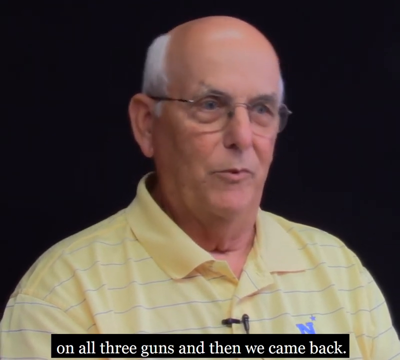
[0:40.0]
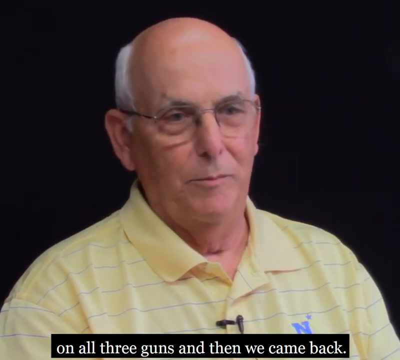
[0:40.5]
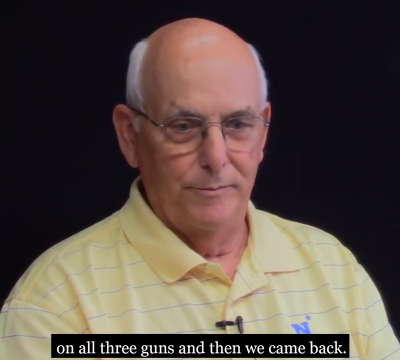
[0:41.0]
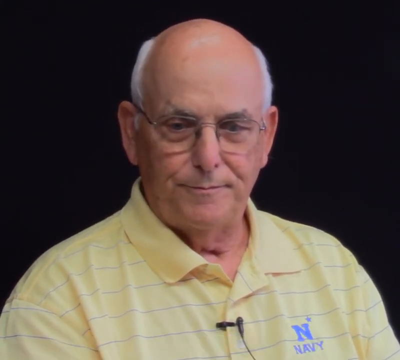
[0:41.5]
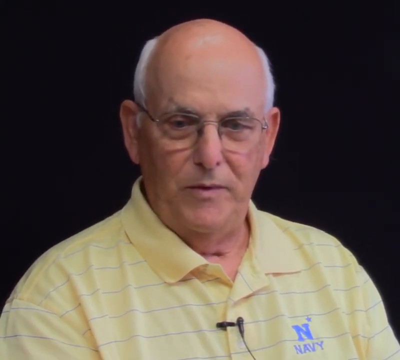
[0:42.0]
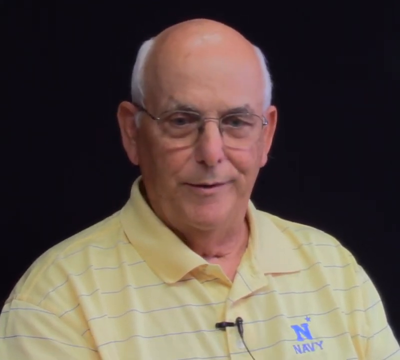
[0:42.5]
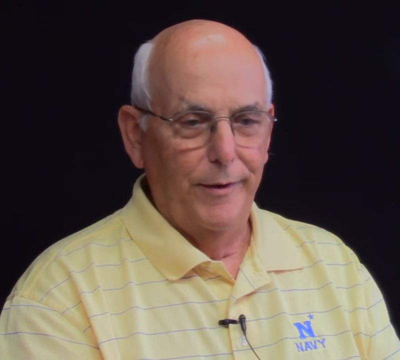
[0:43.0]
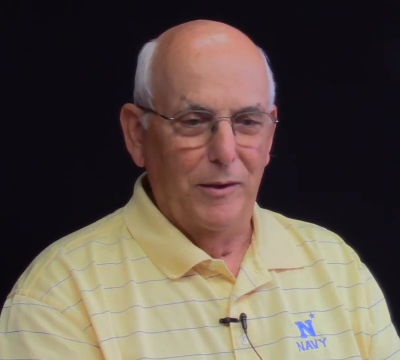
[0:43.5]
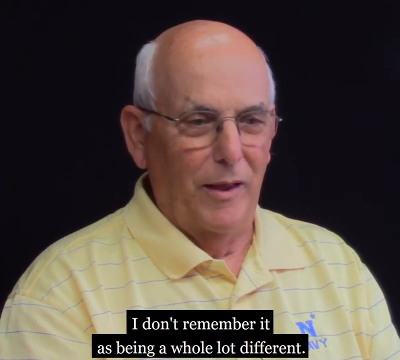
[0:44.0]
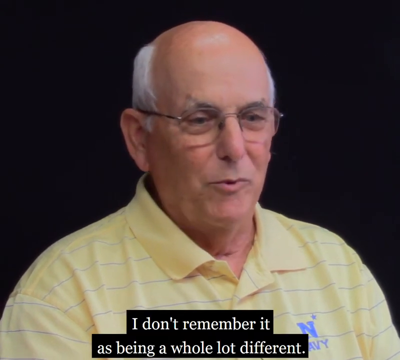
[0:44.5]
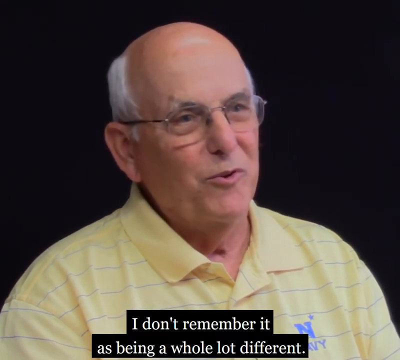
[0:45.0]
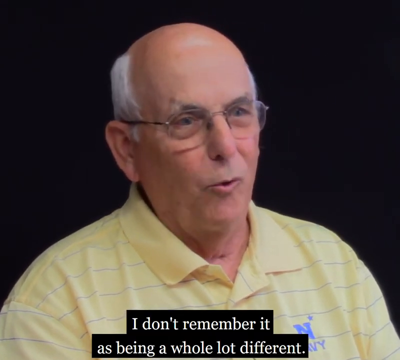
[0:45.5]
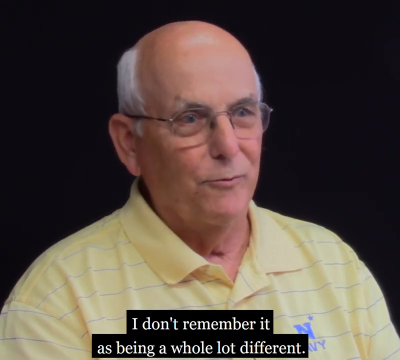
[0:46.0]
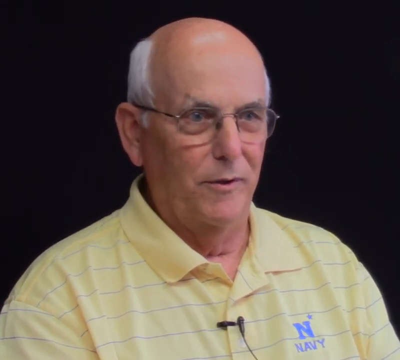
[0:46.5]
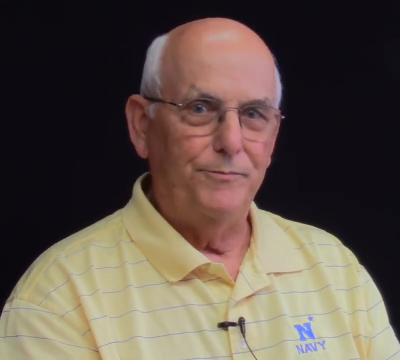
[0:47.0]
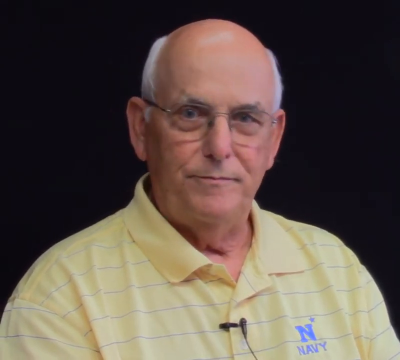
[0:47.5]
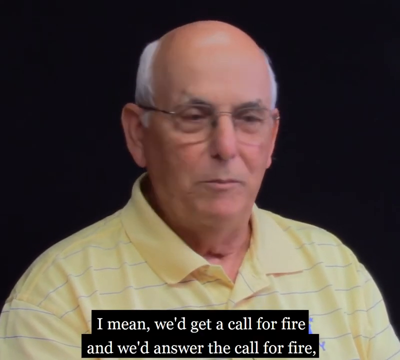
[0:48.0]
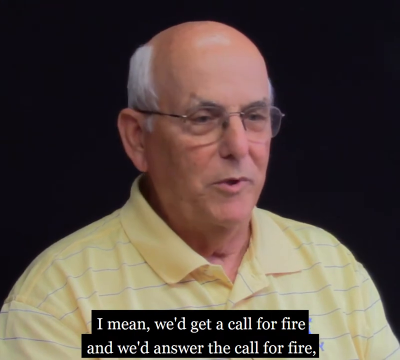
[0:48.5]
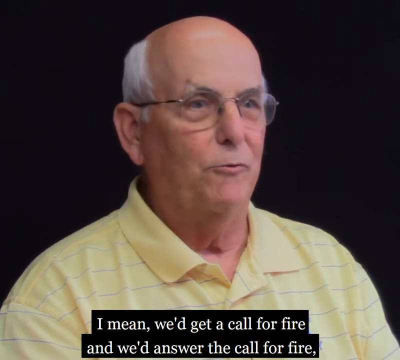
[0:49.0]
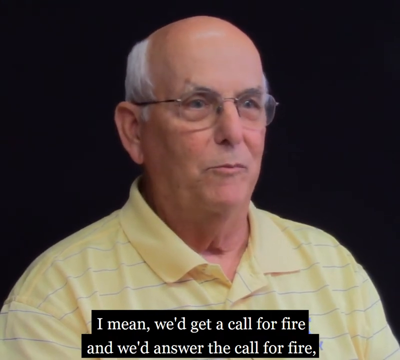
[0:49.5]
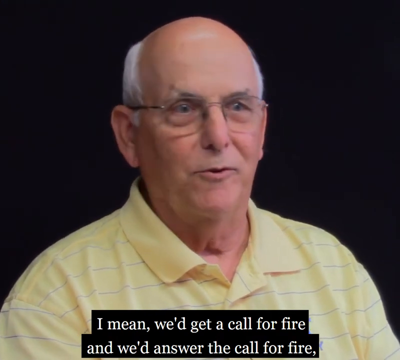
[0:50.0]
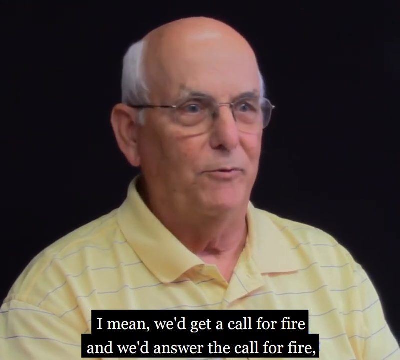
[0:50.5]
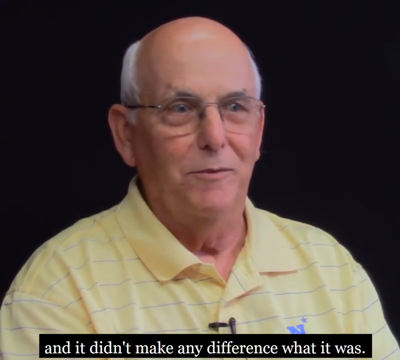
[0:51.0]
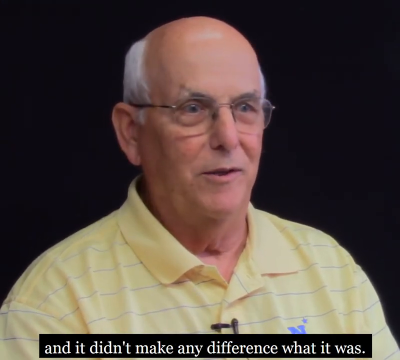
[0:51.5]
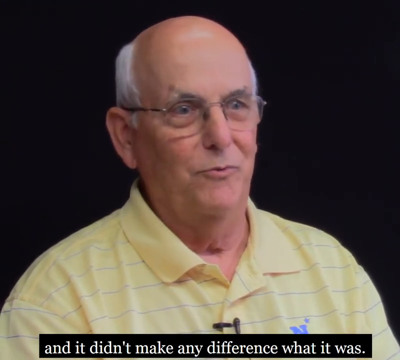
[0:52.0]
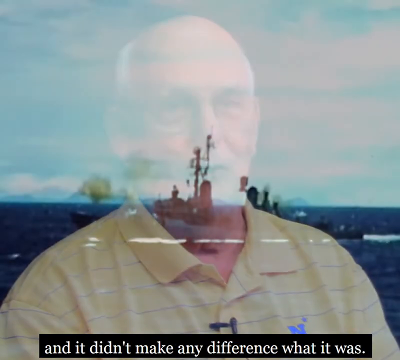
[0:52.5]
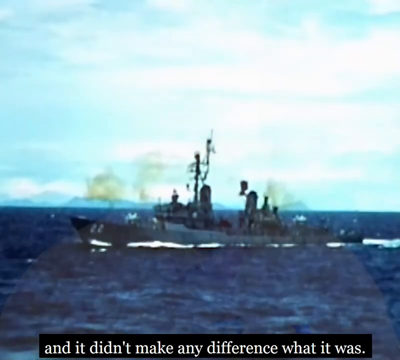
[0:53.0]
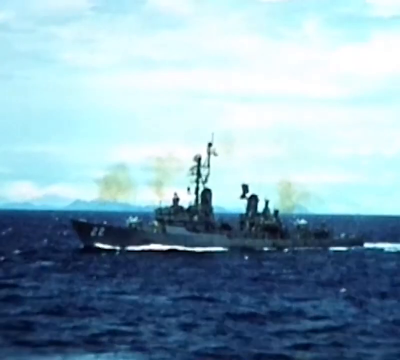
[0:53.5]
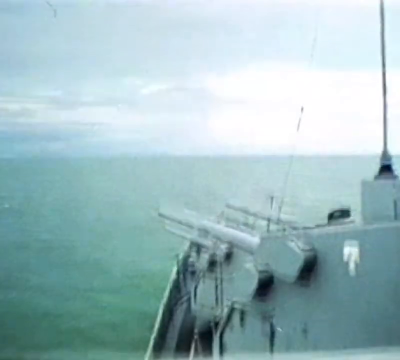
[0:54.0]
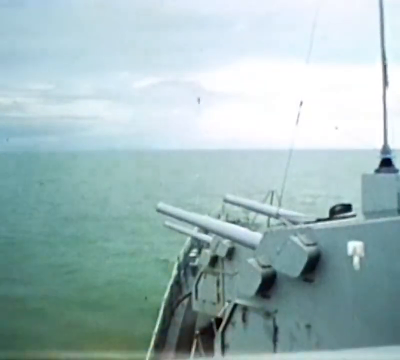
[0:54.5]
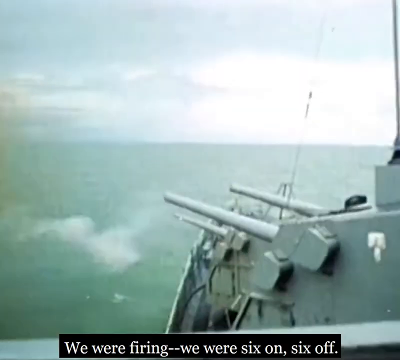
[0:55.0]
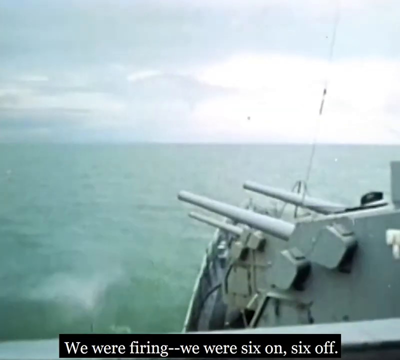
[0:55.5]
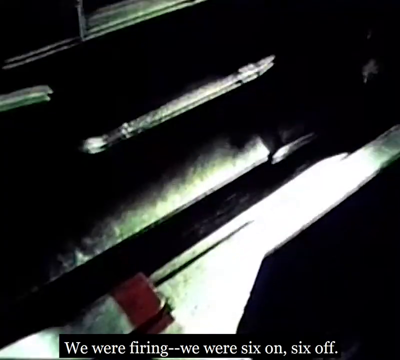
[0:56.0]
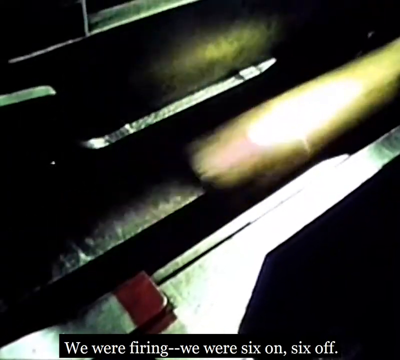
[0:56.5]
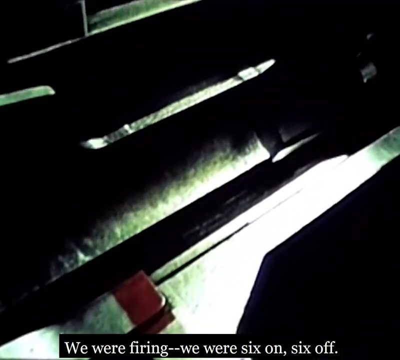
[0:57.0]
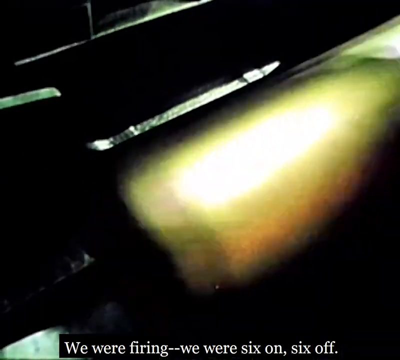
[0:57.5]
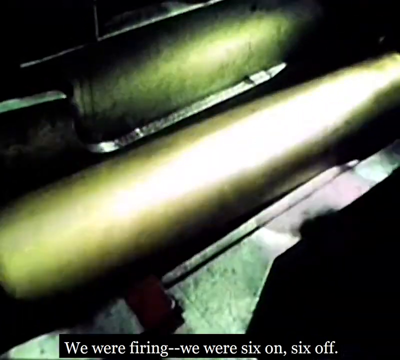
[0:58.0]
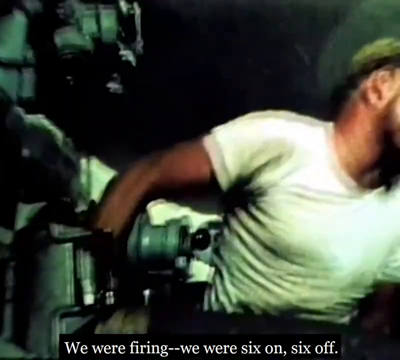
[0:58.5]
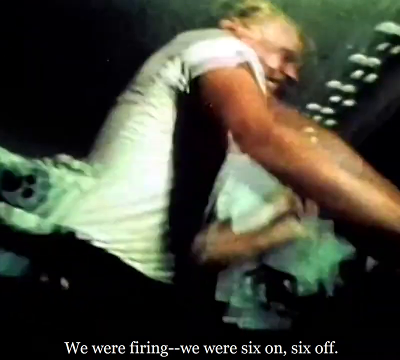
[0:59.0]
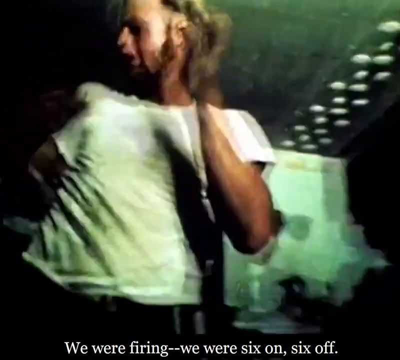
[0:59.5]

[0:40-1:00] The older white man appears against a black screen, balding with white hair on the left and right sides, wearing black-rimmed glasses and a yellow collared shirt with blue lines, with a black microphone clipped to the shirt. He says, "I don't remember it as being a whole lot different." White lettering below reads "I mean, we get to call for fire and we answer and it didn't make any difference what it was." The next image shows a gray destroyer with cannons out on the water, which is somewhat greenish, under a blue sky with white clouds. The cannons are firing, and the missiles can be seen; the cannon shells are gold. A young white man with blonde hair, wearing a white t-shirt and what look like black pants, is loading the cannon.